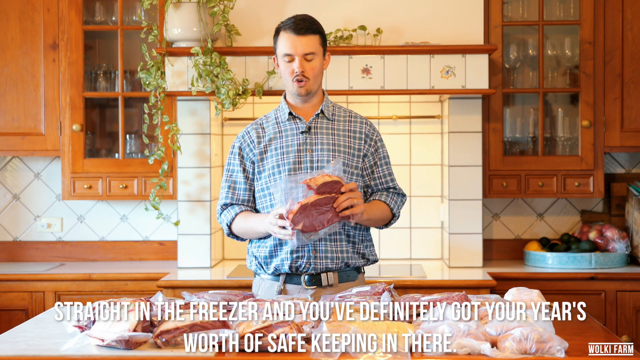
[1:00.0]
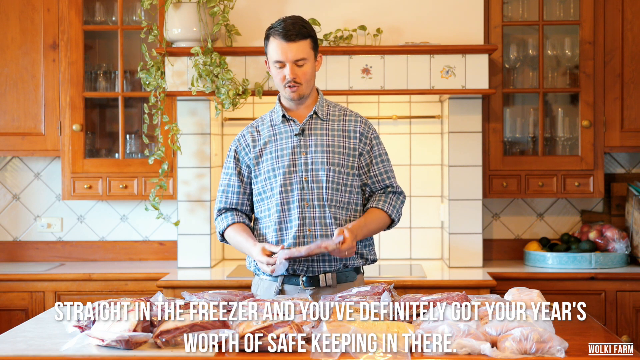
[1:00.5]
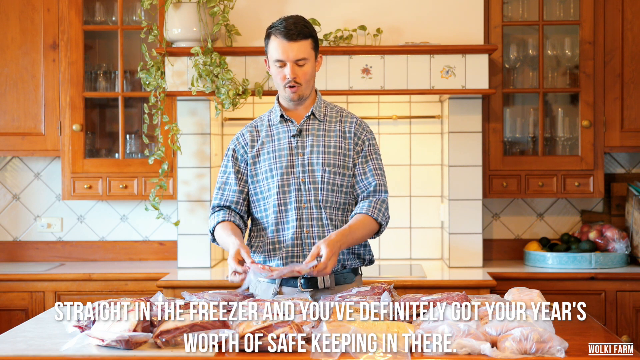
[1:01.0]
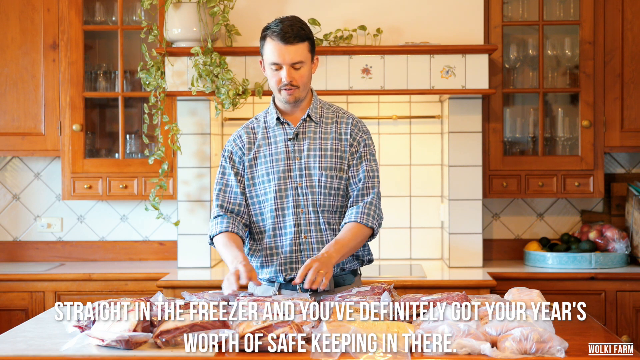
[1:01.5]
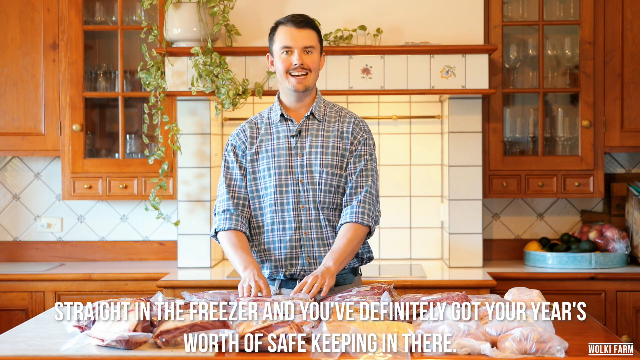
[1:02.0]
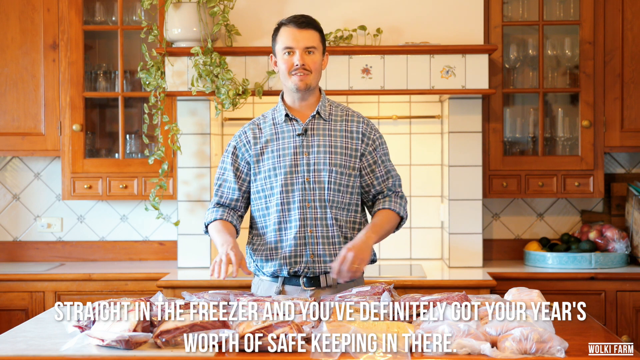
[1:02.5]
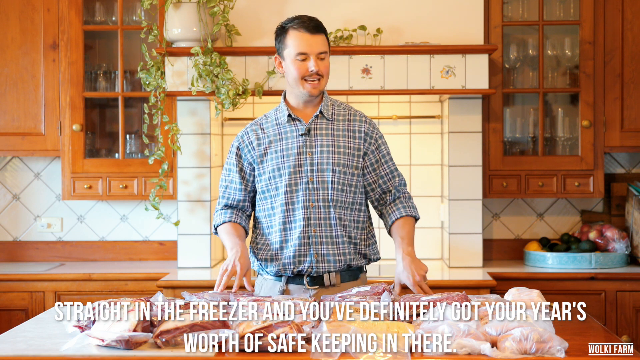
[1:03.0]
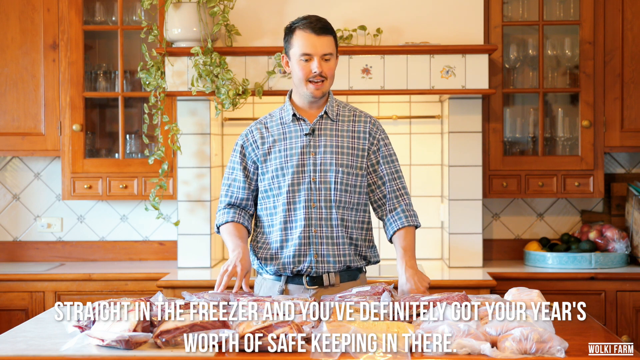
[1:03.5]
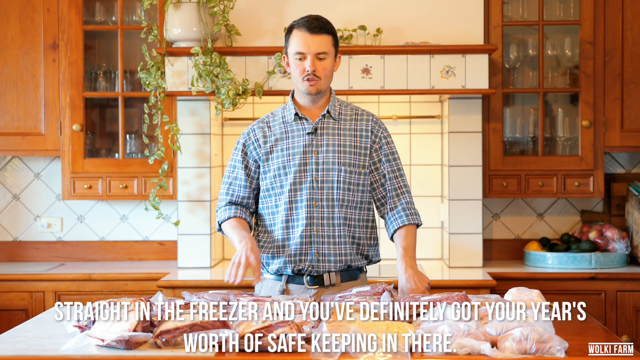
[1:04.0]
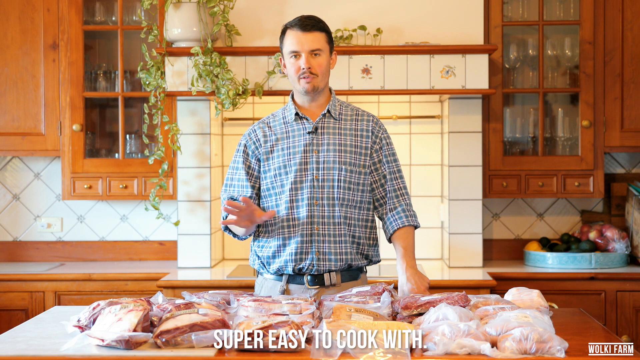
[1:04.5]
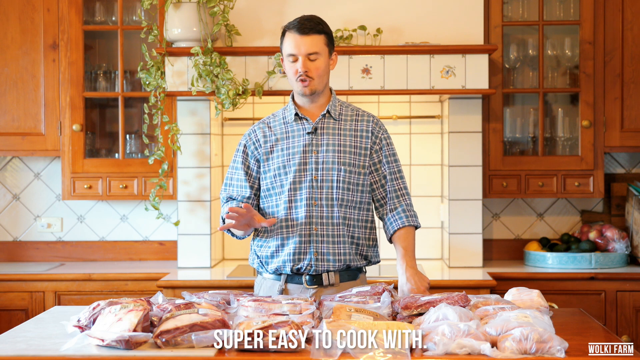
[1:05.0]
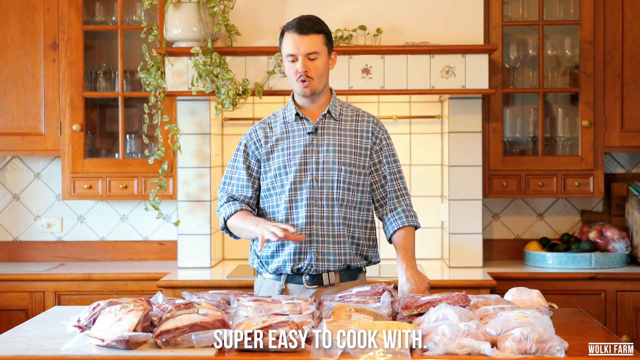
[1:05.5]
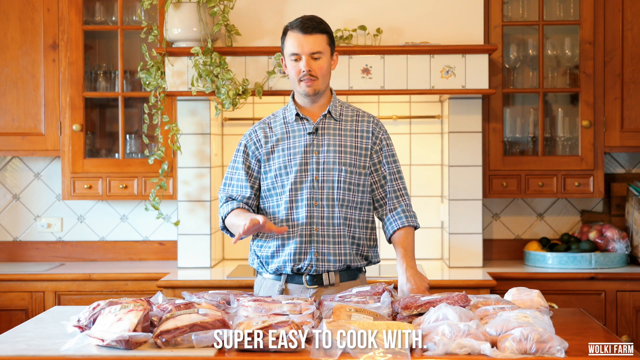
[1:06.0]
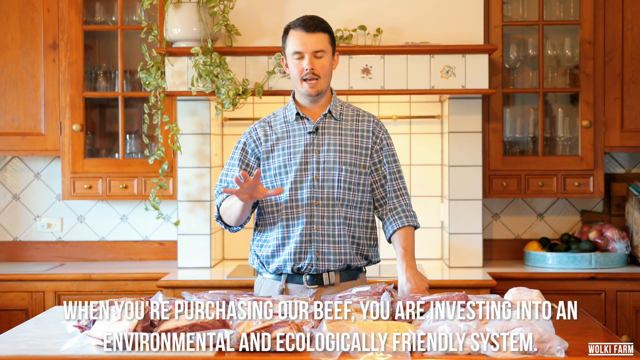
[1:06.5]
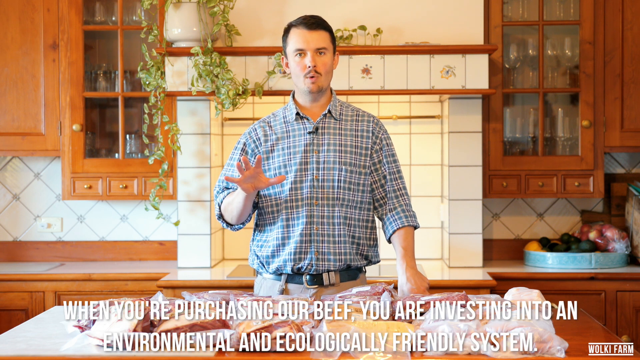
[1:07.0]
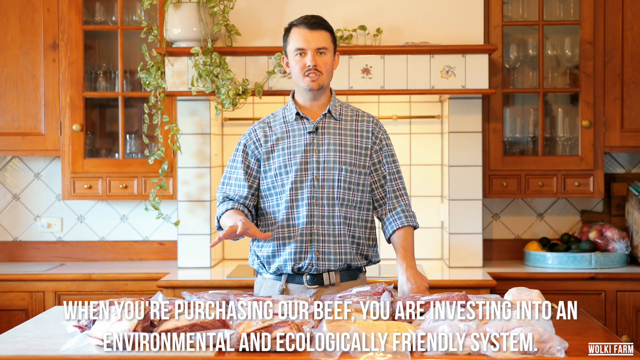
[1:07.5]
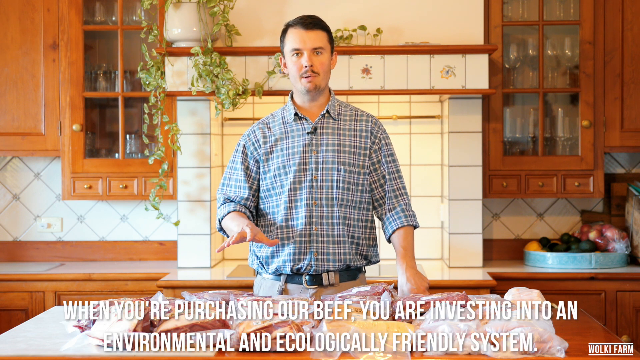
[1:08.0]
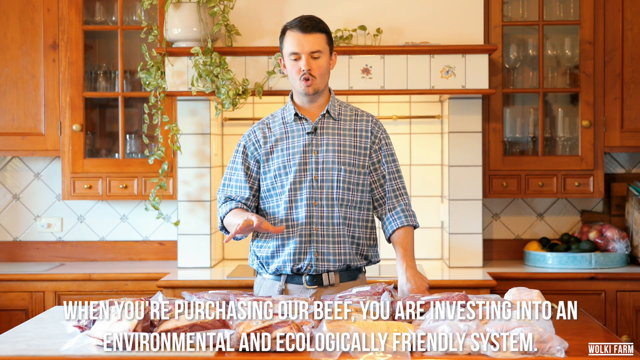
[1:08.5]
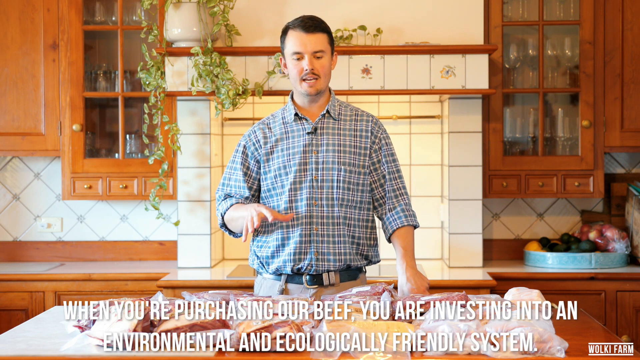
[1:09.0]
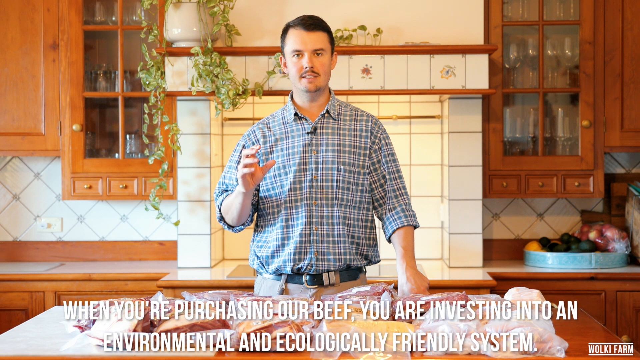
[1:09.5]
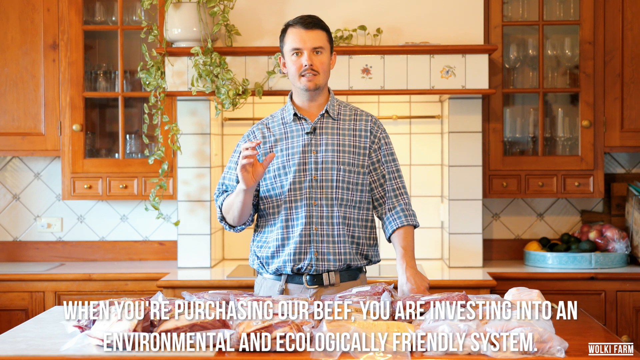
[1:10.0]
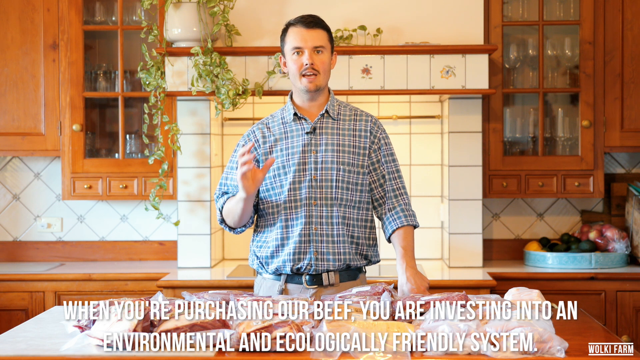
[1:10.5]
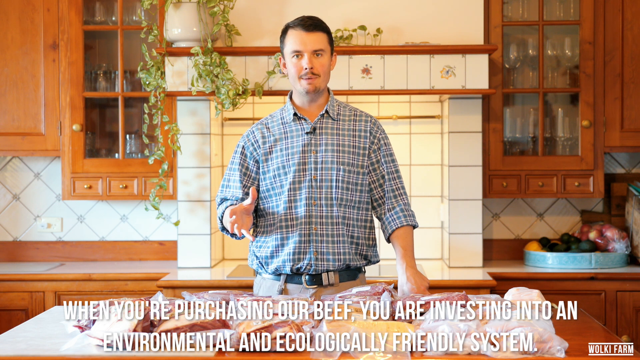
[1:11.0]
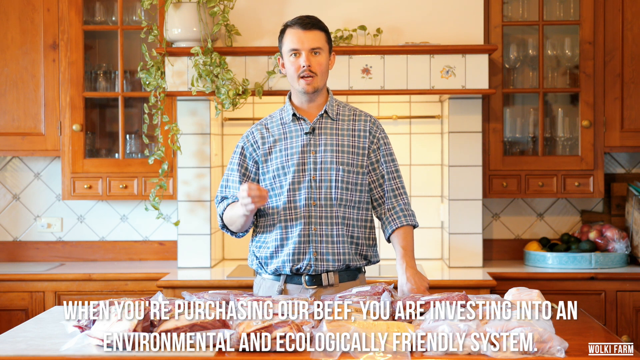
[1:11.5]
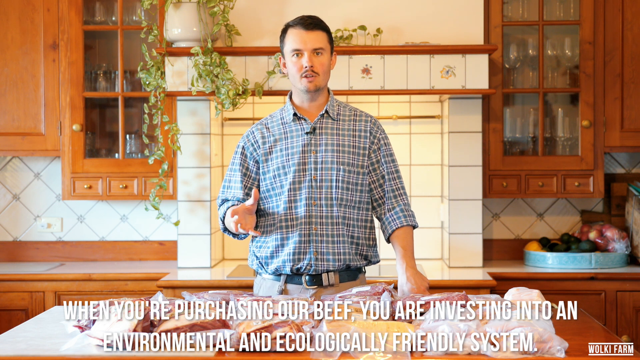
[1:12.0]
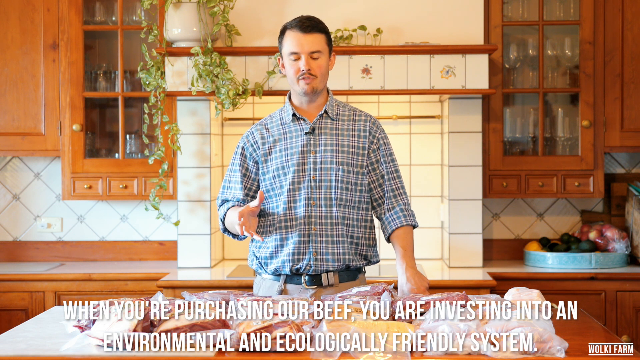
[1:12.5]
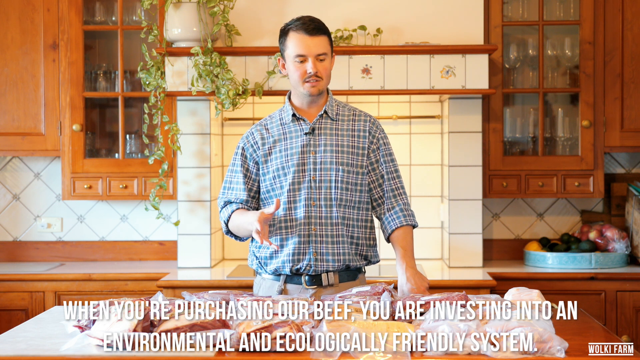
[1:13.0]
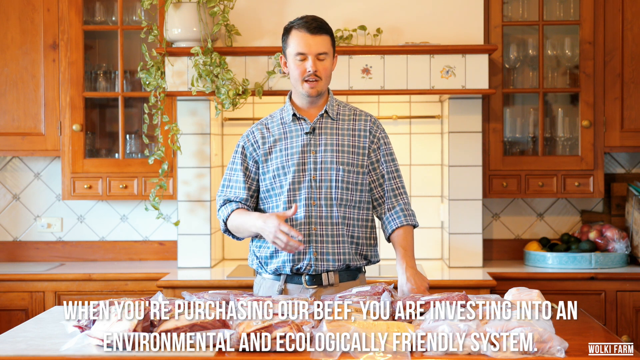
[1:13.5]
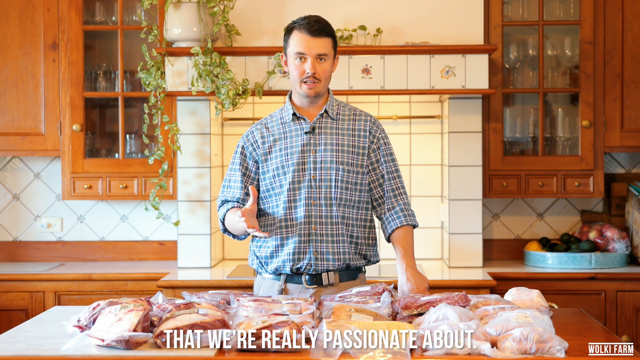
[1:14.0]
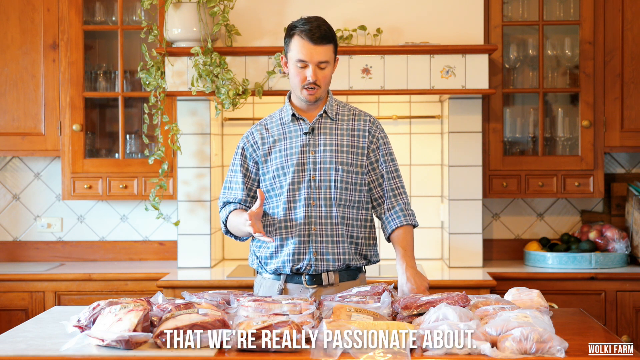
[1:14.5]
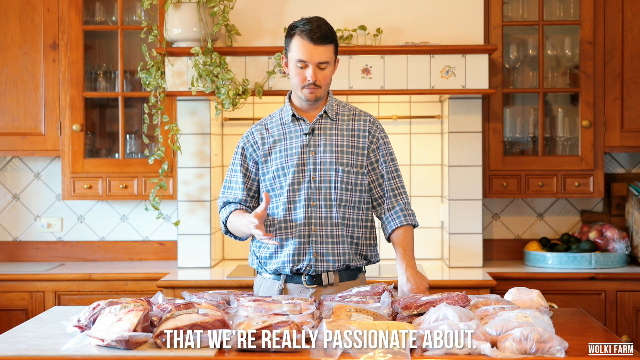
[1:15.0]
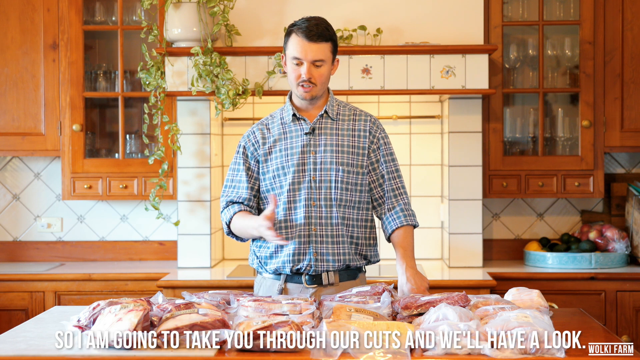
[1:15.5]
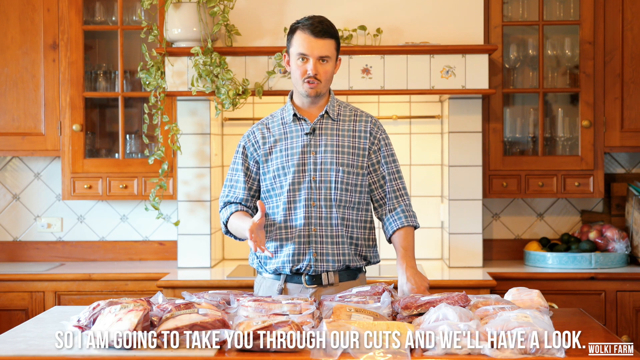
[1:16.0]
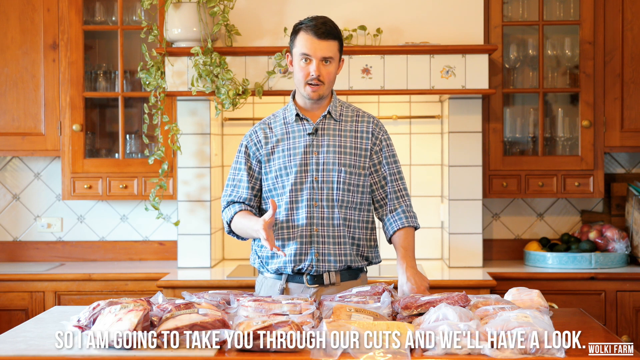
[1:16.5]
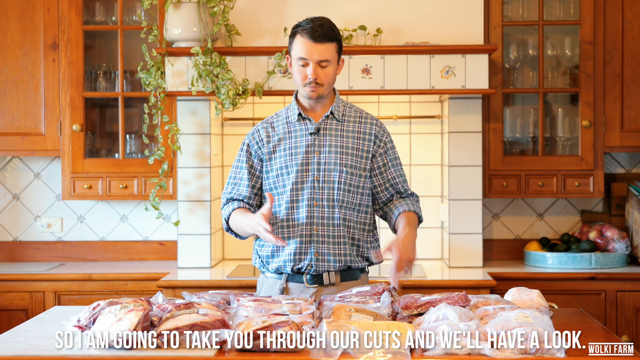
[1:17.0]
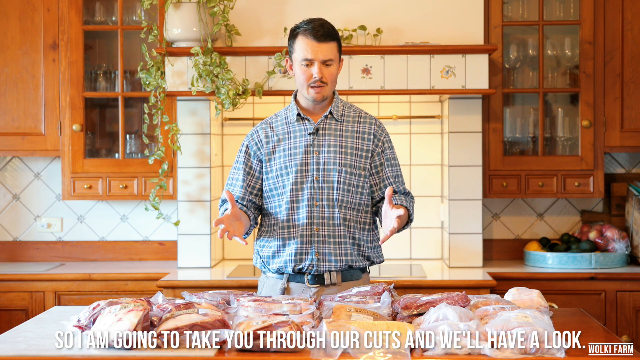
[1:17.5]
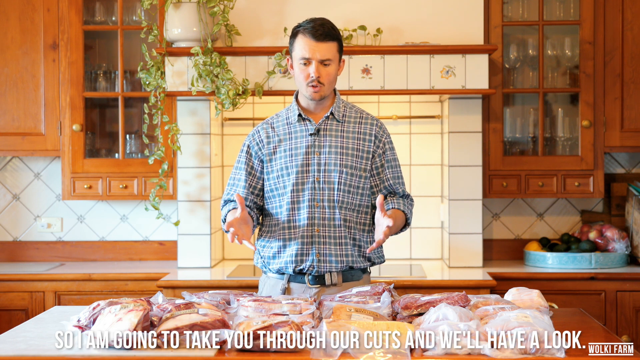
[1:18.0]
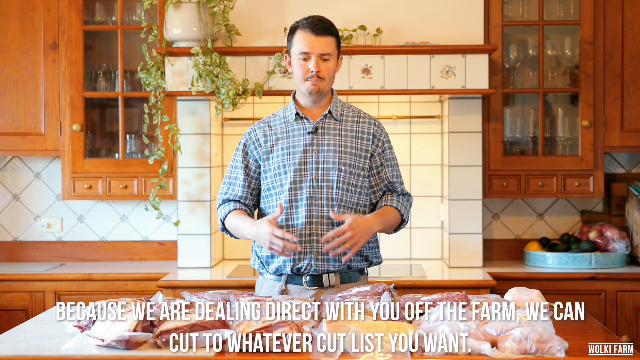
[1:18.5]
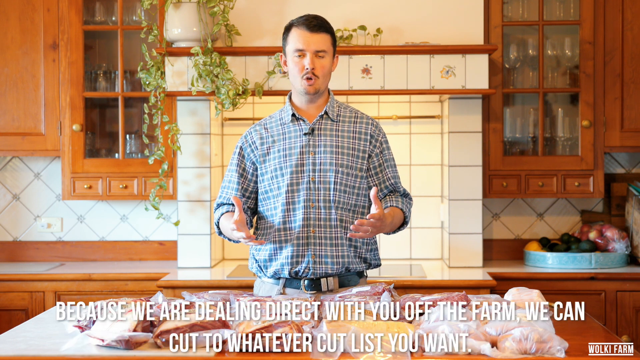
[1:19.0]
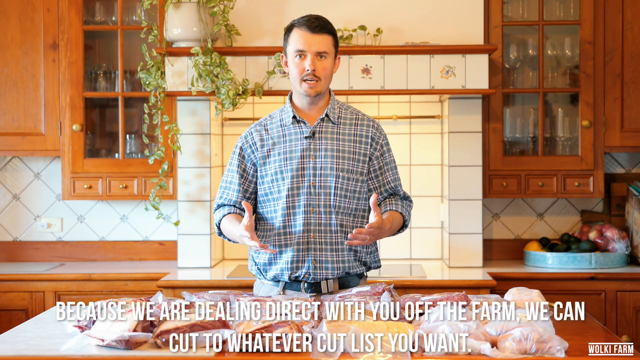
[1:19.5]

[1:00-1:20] Jacob picks up a steak and puts it down again. He says, "super easy to cook with. When you are purchasing our beef, you are investing into an environmental and ecologically friendly system that we're really passionate about. So I'm going to take you through our cuts and we'll have a look because we're dealing direct" with you off your phone. Jacob gestures a lot with his hands while talking. The kitchen definitely looks like a farmhouse kitchen. Directly behind him on the counter there appears to be a hob, with a shelf above it holding a plant with hanging green vines. There are wall cabinets with glass doors, with glassware visible behind them. On the right-hand side of the counter is a large blue fruit bowl with apples, oranges and some kind of dark fruit in it.